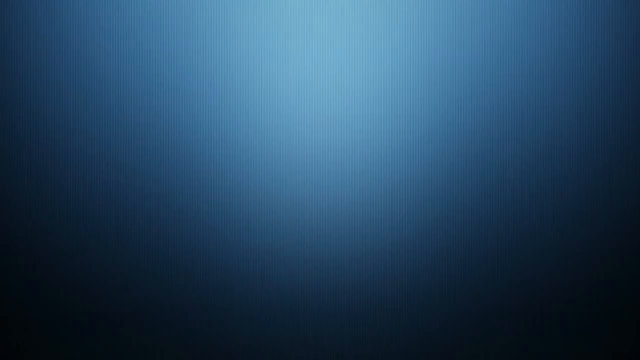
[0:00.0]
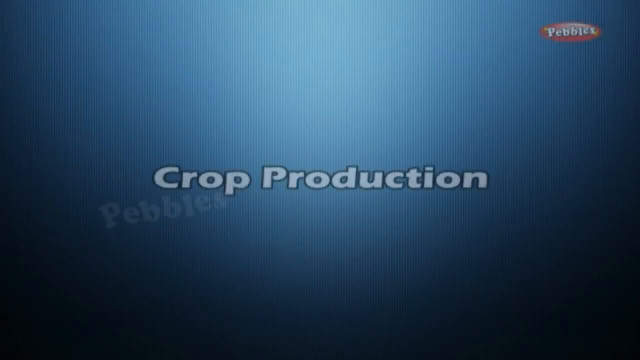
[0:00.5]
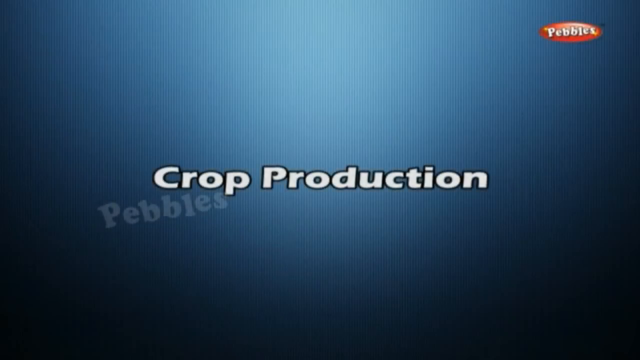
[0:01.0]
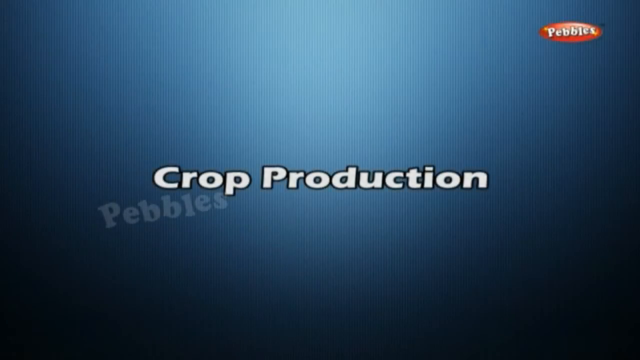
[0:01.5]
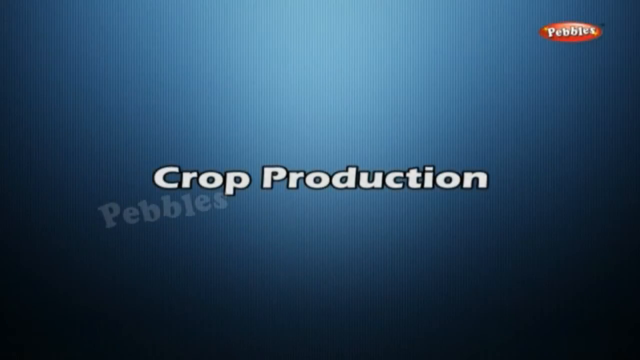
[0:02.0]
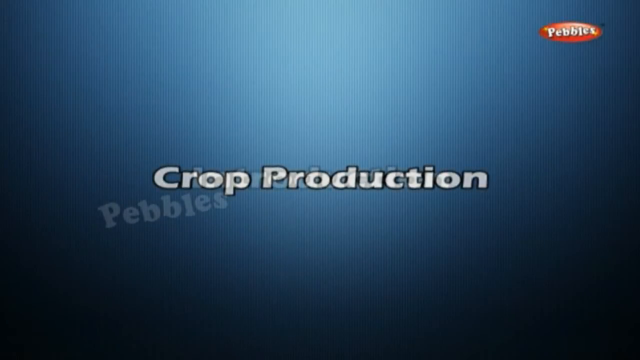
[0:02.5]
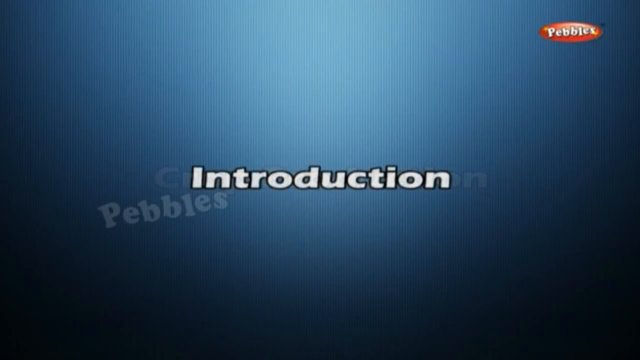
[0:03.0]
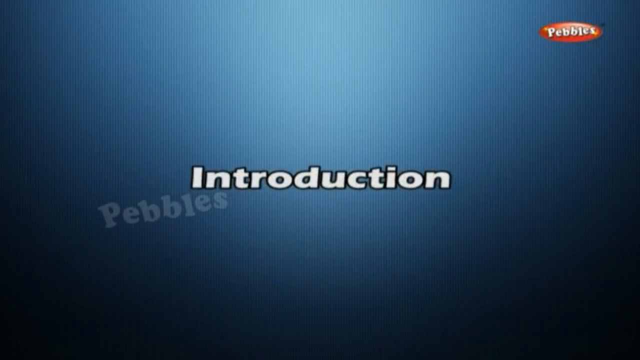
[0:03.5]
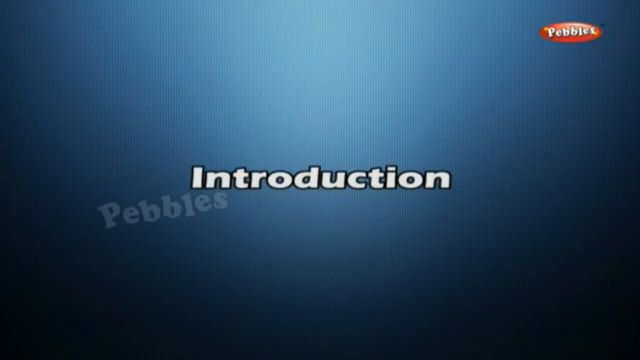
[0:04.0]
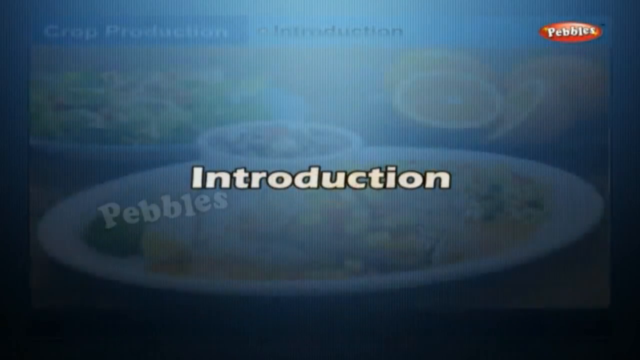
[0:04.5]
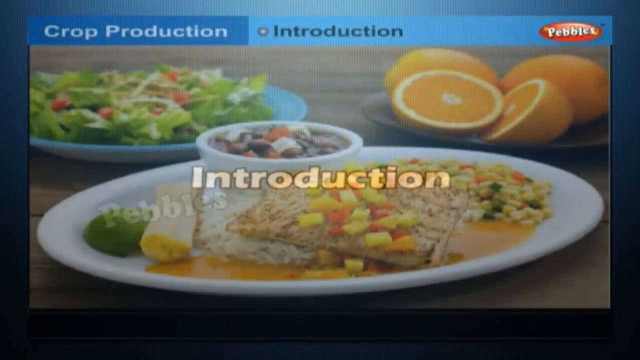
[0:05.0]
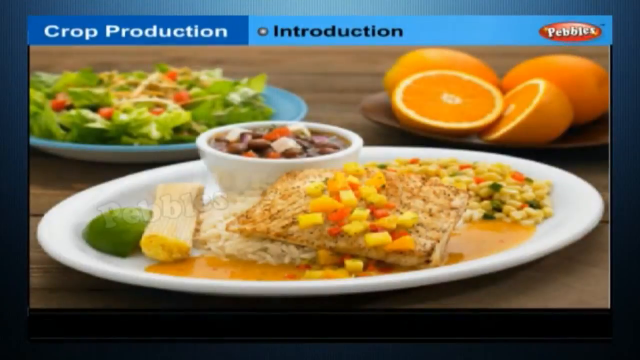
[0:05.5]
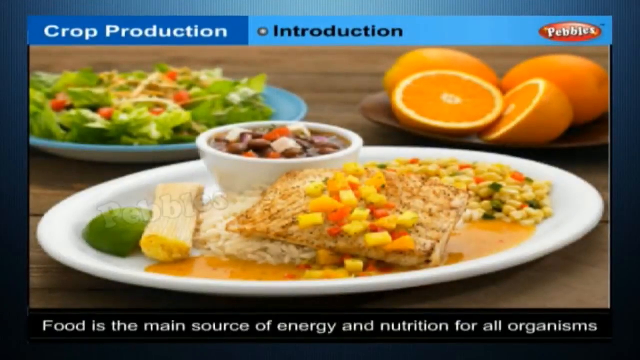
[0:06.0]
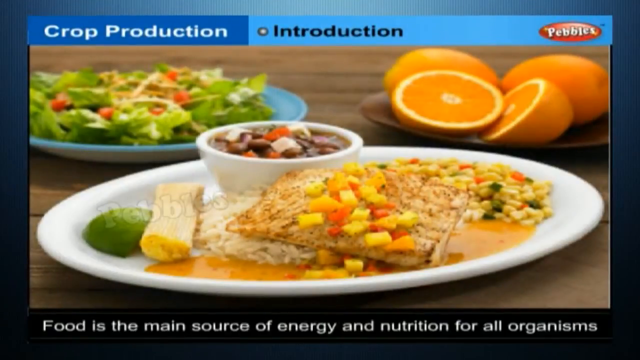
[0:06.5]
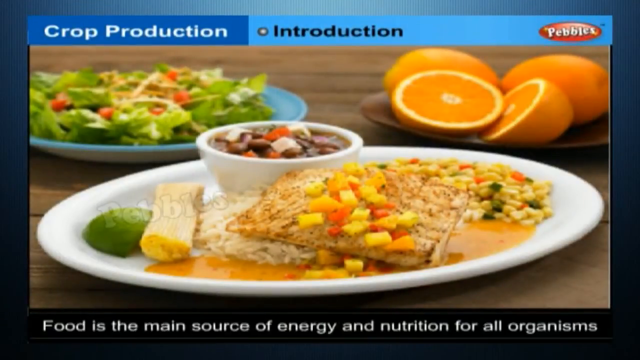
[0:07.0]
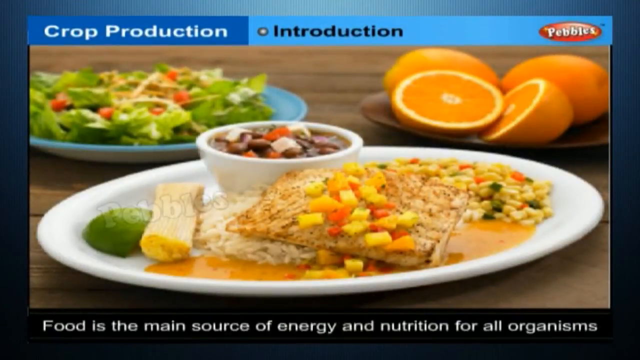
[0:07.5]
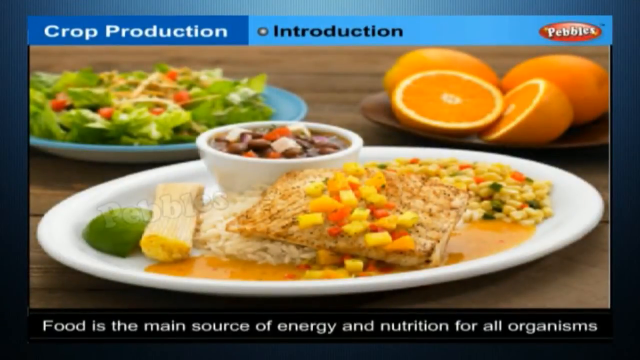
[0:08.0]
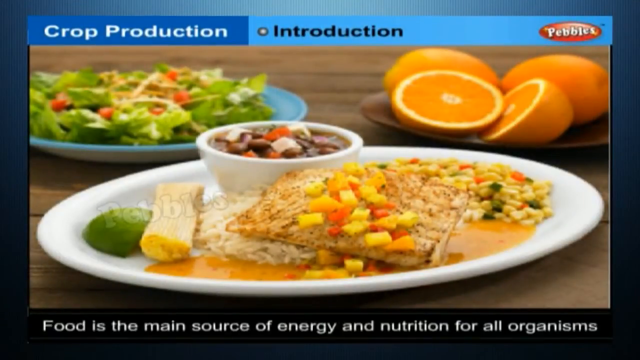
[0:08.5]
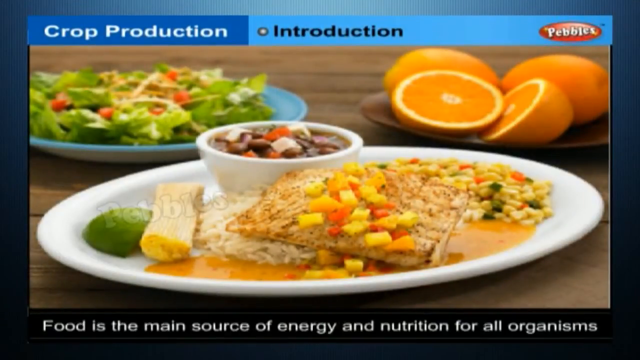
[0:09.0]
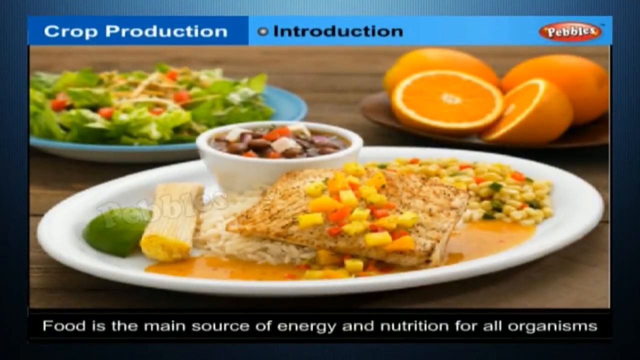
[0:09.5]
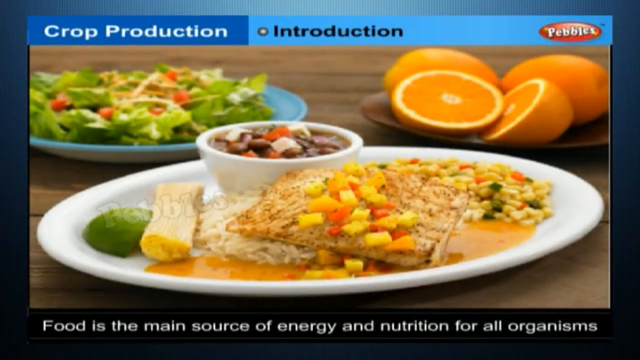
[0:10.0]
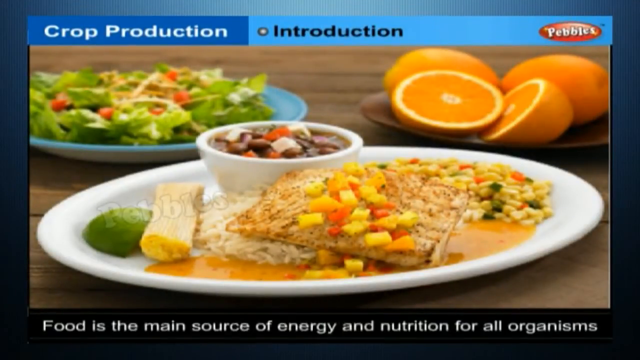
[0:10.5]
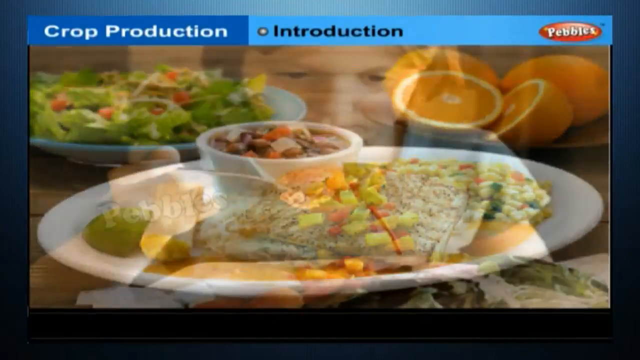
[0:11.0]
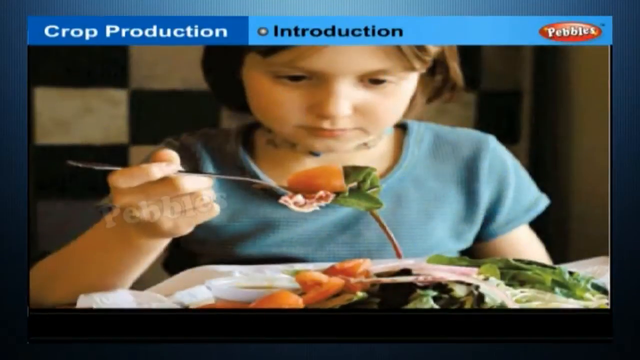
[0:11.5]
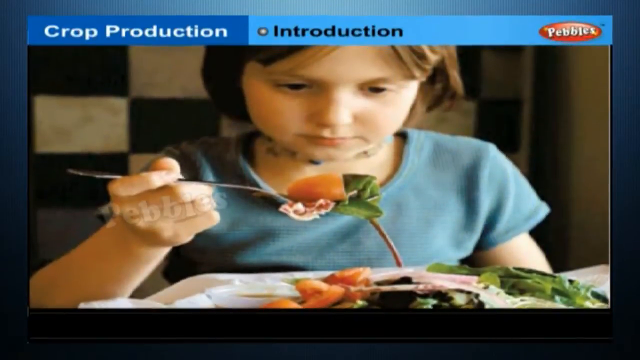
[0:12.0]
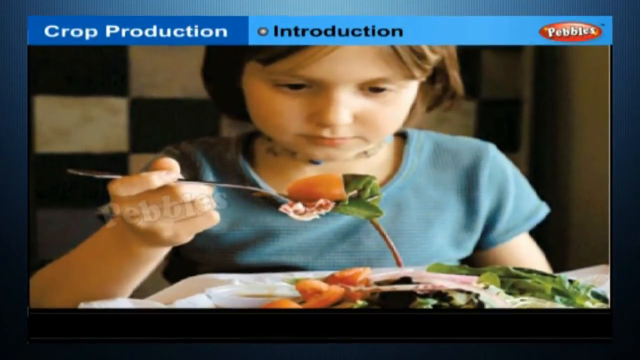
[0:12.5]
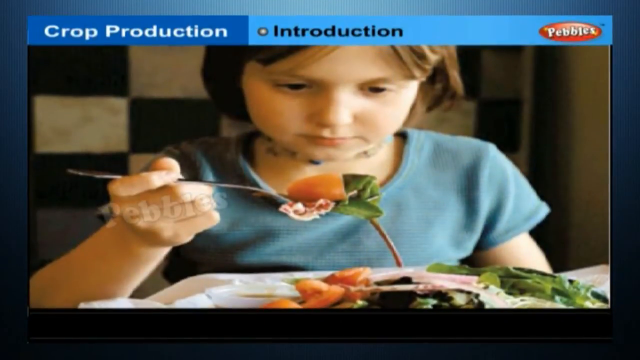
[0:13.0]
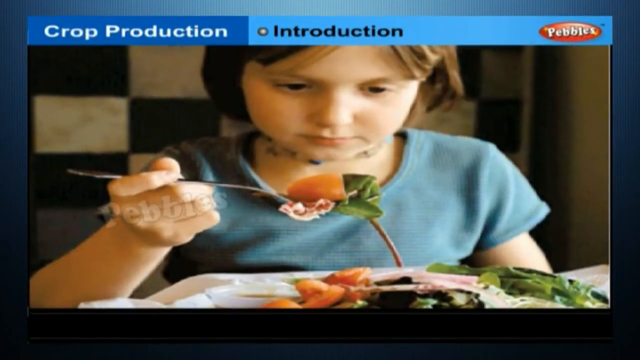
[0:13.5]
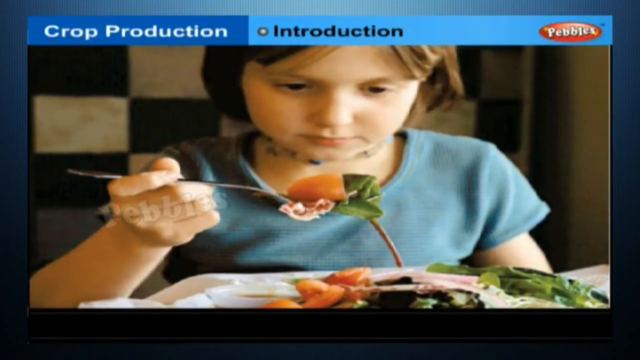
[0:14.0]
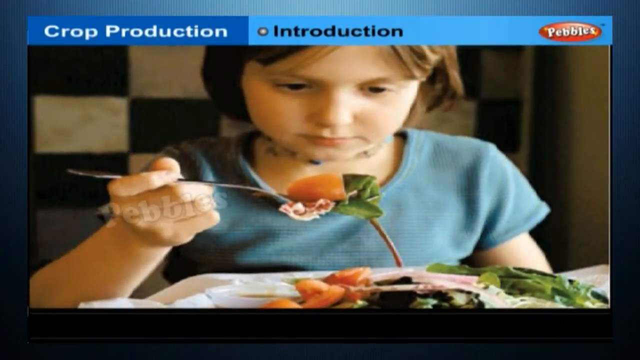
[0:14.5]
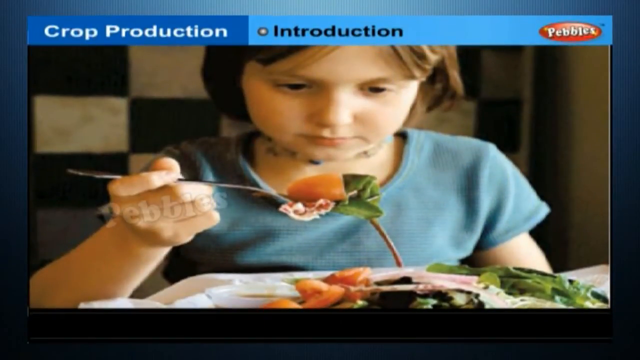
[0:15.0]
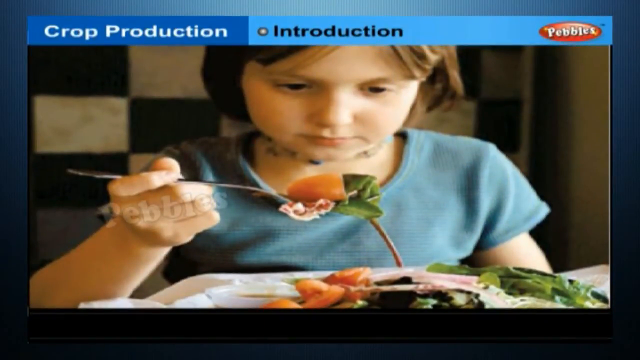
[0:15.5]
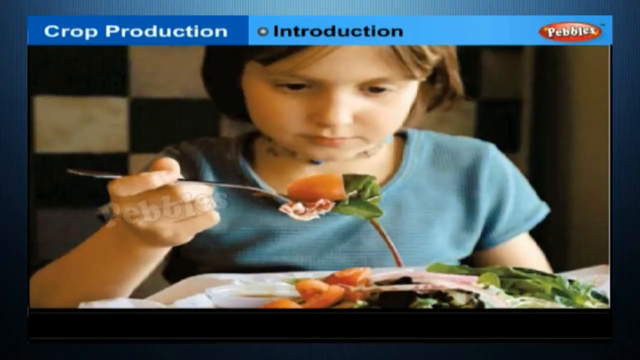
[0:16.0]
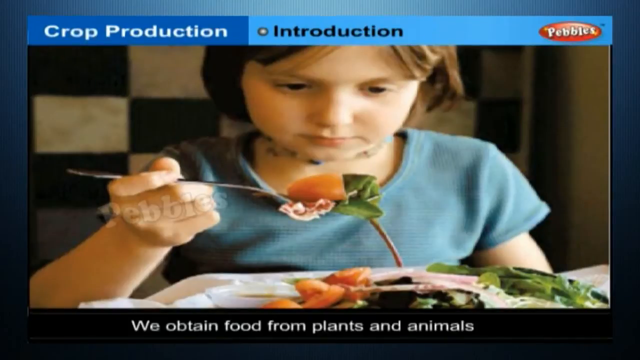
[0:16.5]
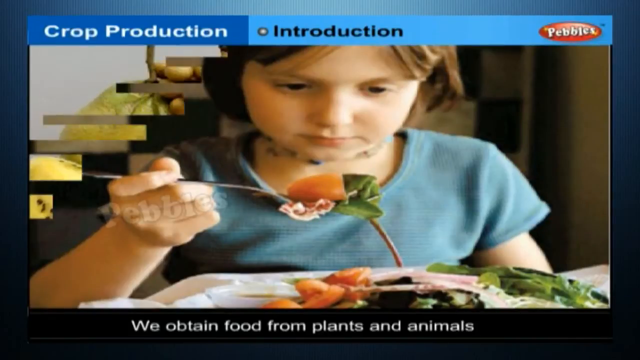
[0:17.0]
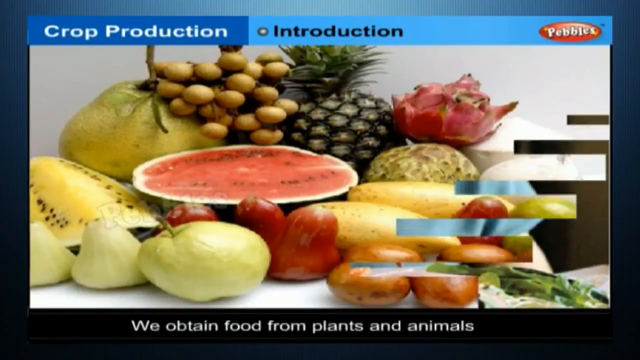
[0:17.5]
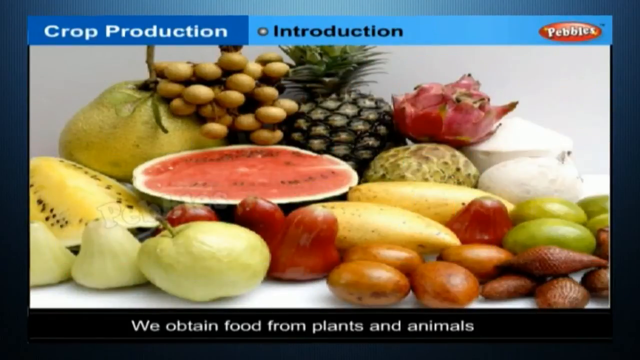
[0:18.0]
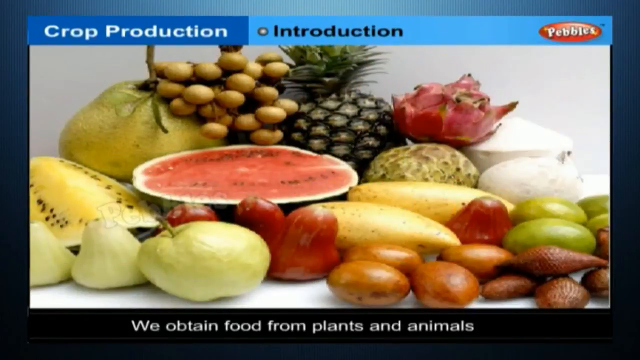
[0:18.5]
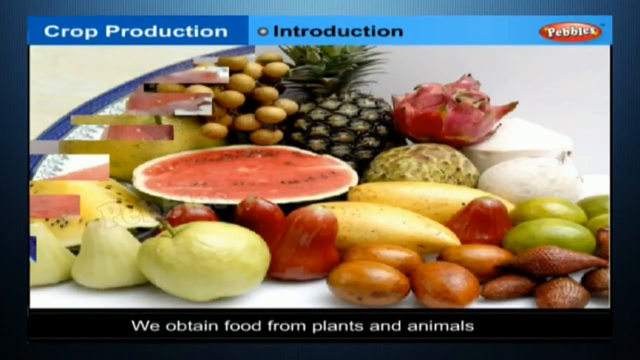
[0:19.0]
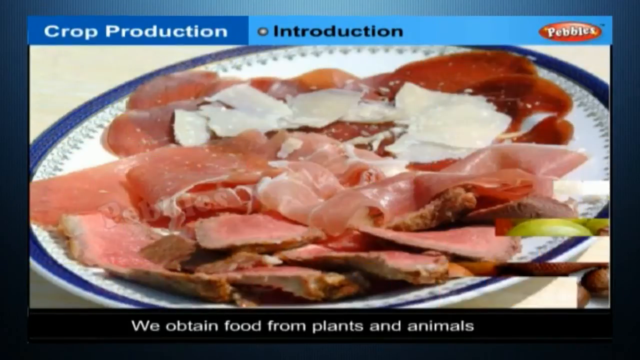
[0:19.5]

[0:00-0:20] The video opens on a blue screen with the title "crop production from pebbles". After the introduction, a plate of food appears: rice with what looks like a cracker, and some beans in a dish behind. Behind that is a blue plate with salad, and at the back to the right is a brown plate with some oranges, one of which has been split in half. The title caption at the bottom of the screen reads "Food is the main source of energy and nutrition for all organisms." Next comes a picture of a young girl in a blue top eating a healthy plate of salad and tomatoes, and a title caption appears reading "We obtain food from plants and animals." An image follows of lots of fruit in a display, with olives and a pineapple at the back, a watermelon half, fresh green apples, bananas and other exotic fruits. Last is a plate of cured meats and some cheese slices.